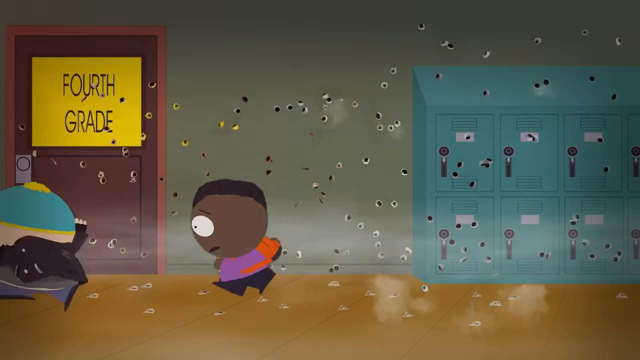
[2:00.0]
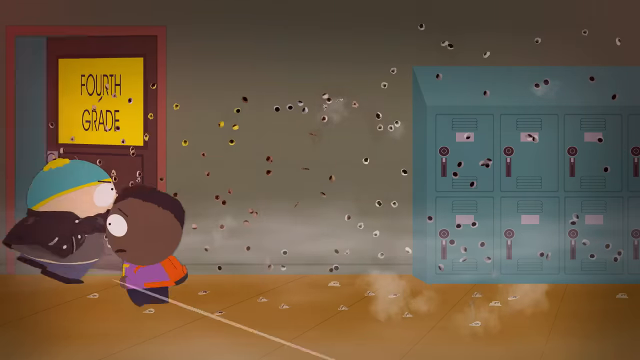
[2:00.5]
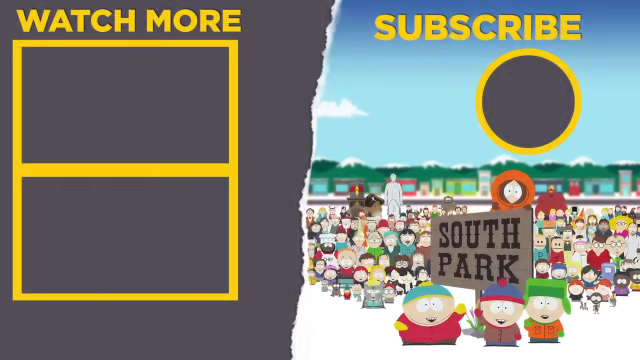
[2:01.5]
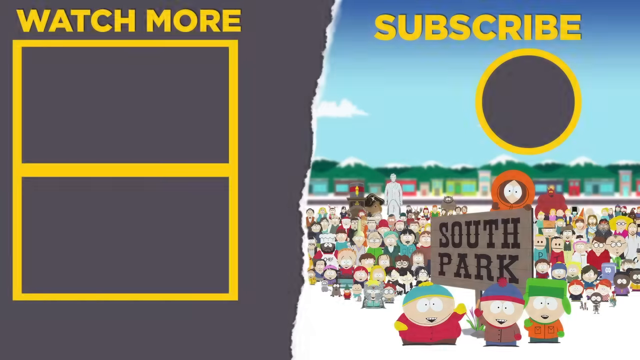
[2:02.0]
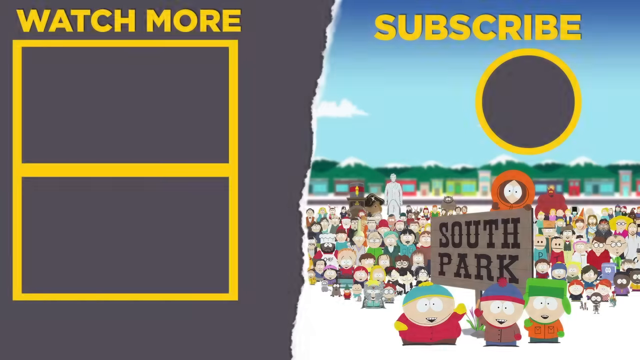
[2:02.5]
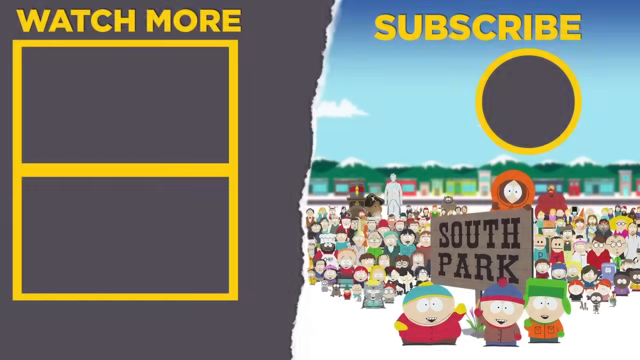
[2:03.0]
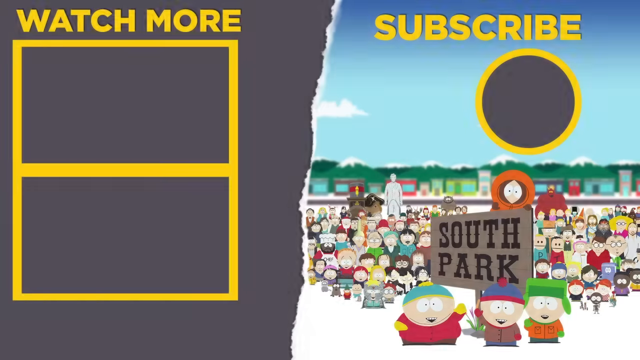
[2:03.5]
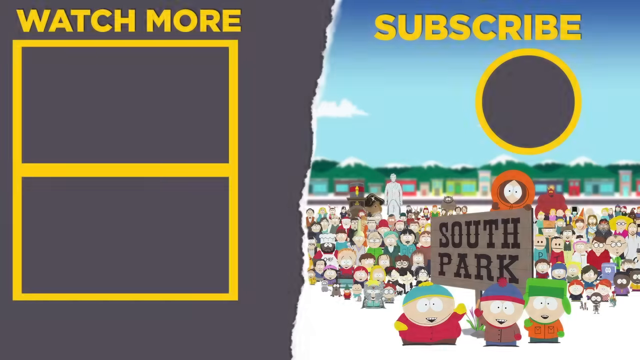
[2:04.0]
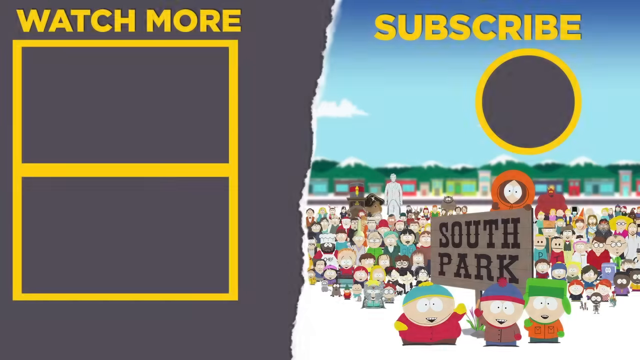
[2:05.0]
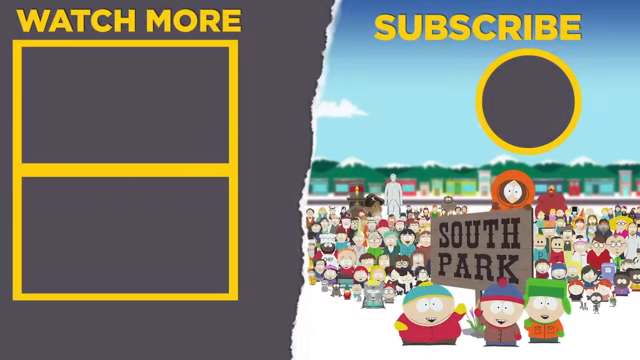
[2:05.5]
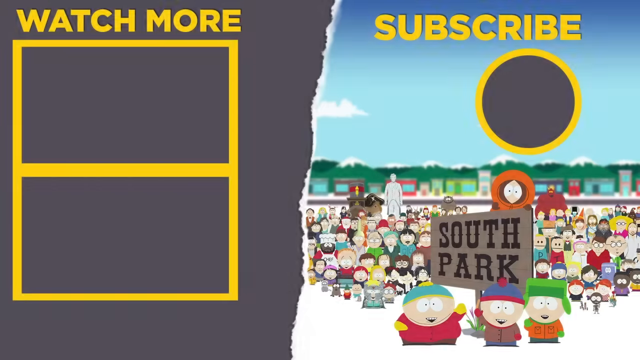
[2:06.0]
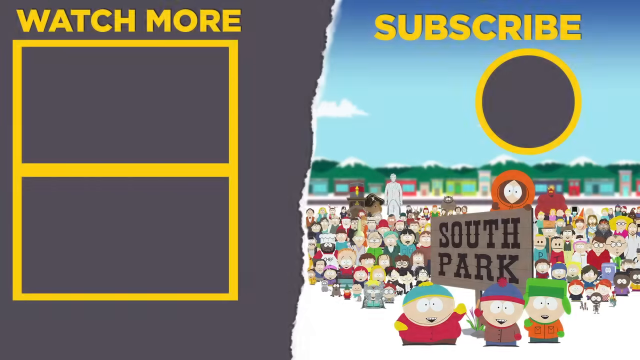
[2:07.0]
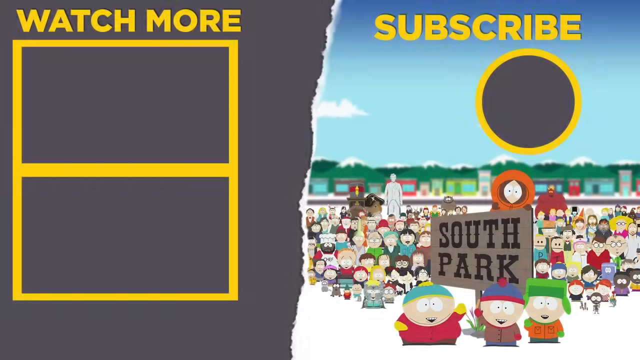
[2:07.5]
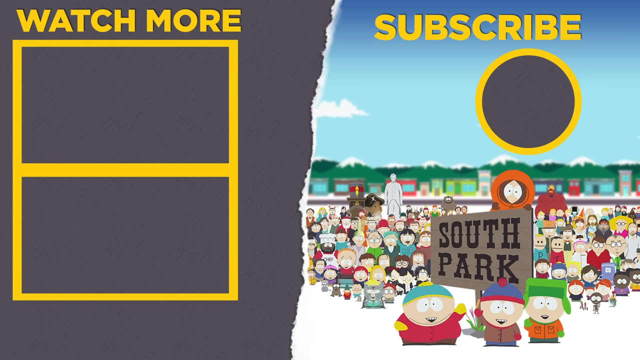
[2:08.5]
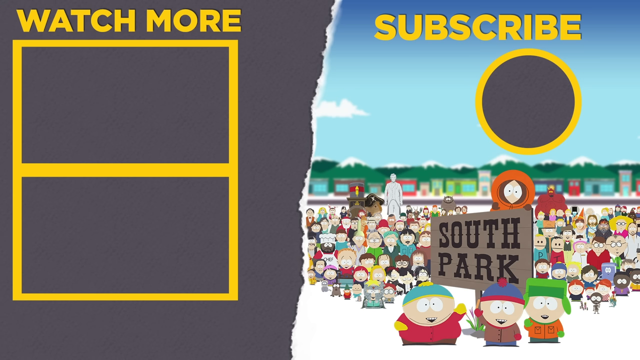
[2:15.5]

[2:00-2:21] The two boys run from the right to the left-hand side of the image. There are multiple bullet holes in all of the walls and the lockers. They run past a door that says "fourth grade" and then go into it. The video then ends with an image that says "watch more" on the left and "subscribe" on the right. The watch more side has a dark grey background with yellow capital letters across the top, and below them a rectangle split horizontally into two, blank inside each part; it appears some videos might be missing. On the right-hand side, "subscribe" is at the top in the same yellow capital-letter font, with a grey circle surrounded by a yellow ring beneath it. In the background is an image of many different characters, some of which appear in the video. Three or four of them at the front hold a wooden sign that says "South Park"; the sign is brown with black text in a kind of old-timey Western font with serifs on each letter. The sky behind them is blue.